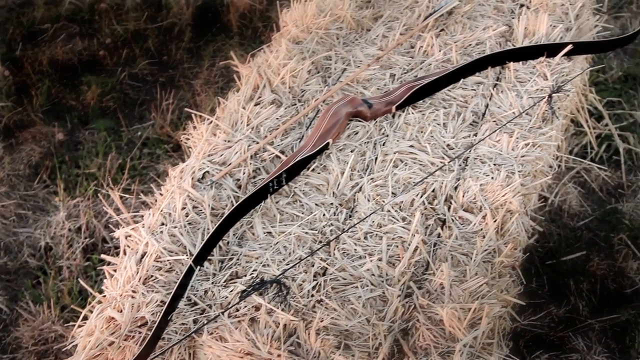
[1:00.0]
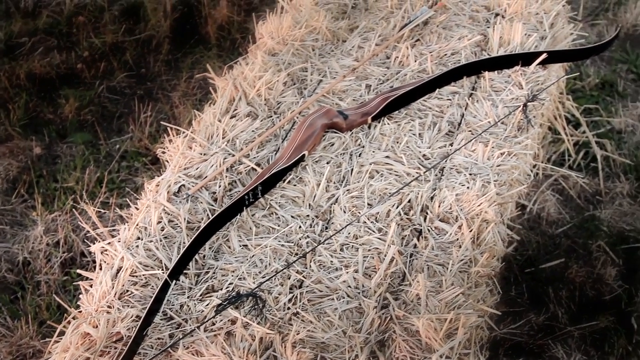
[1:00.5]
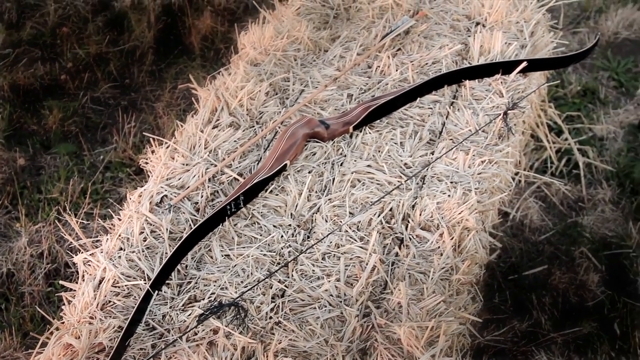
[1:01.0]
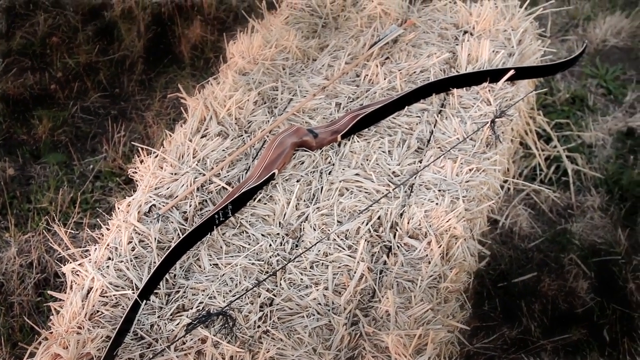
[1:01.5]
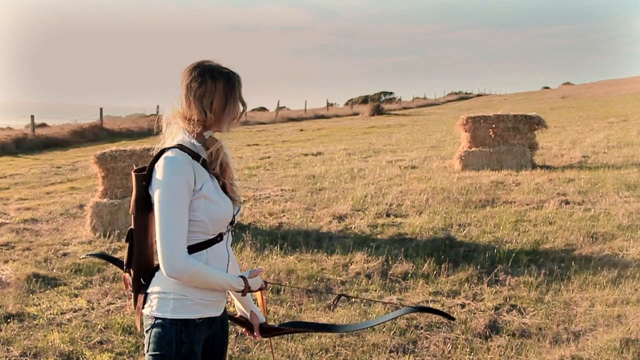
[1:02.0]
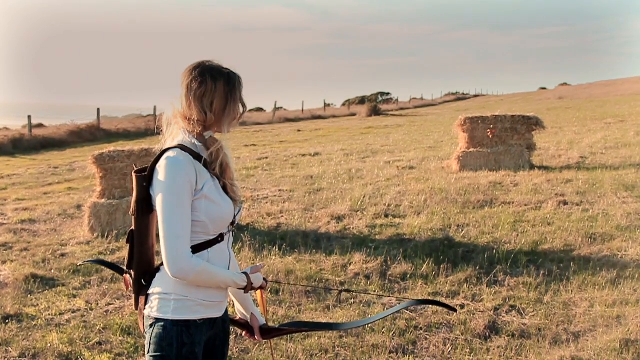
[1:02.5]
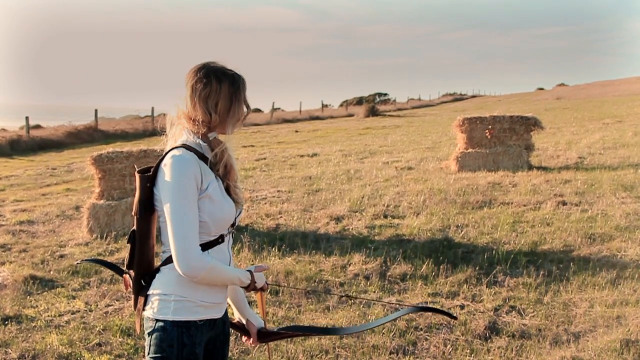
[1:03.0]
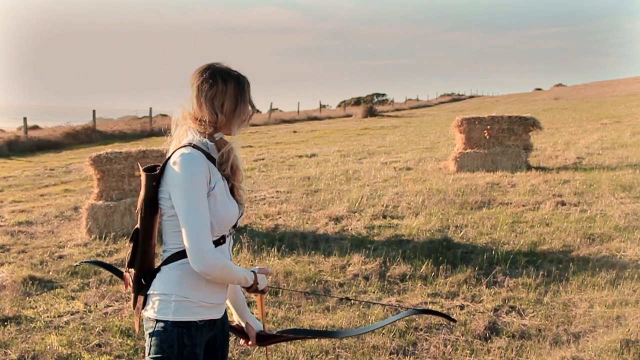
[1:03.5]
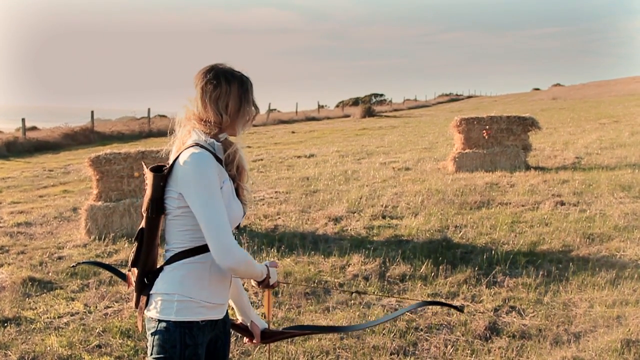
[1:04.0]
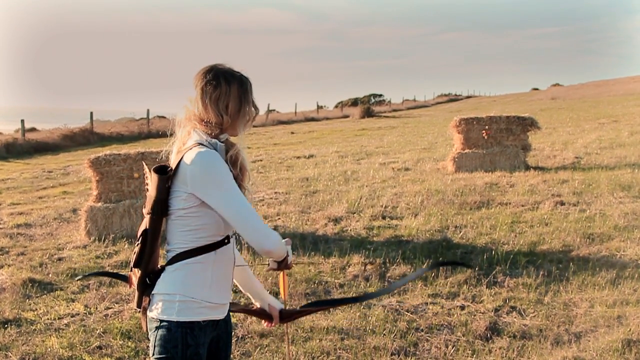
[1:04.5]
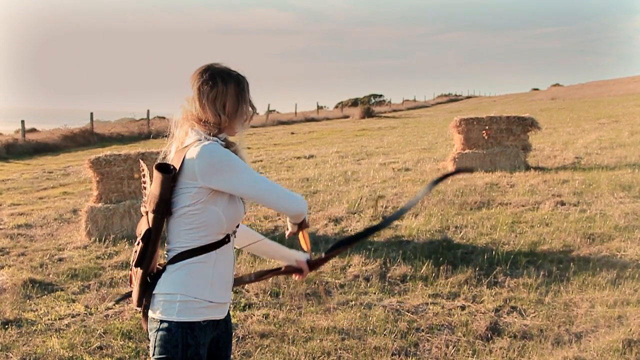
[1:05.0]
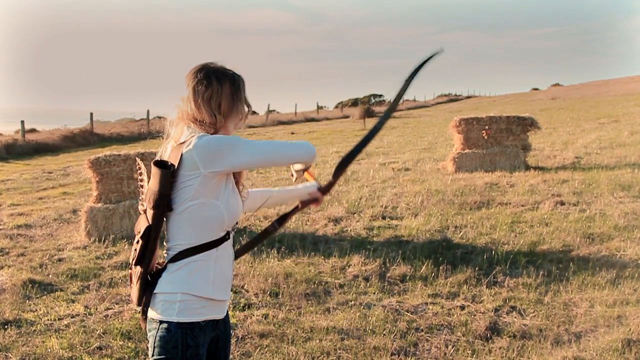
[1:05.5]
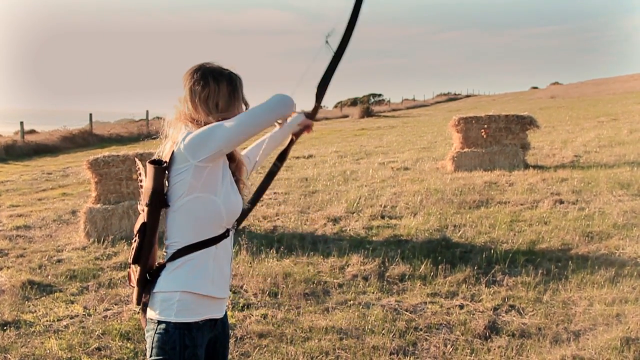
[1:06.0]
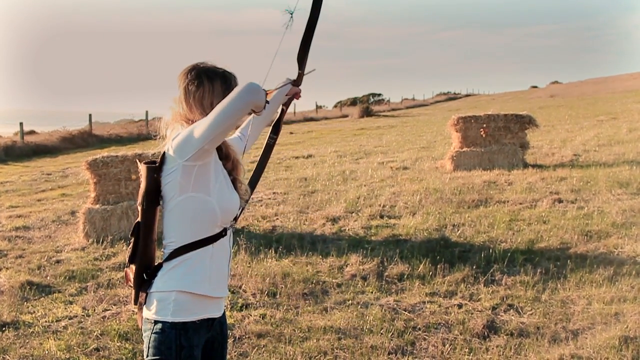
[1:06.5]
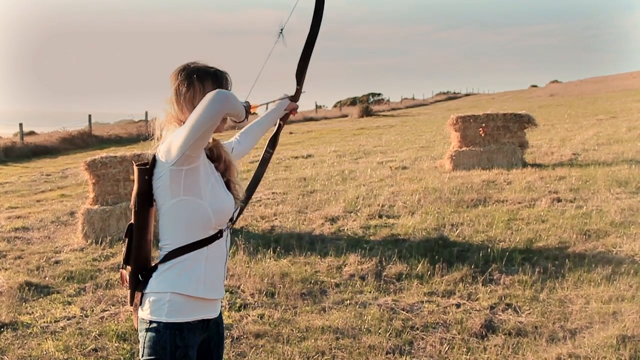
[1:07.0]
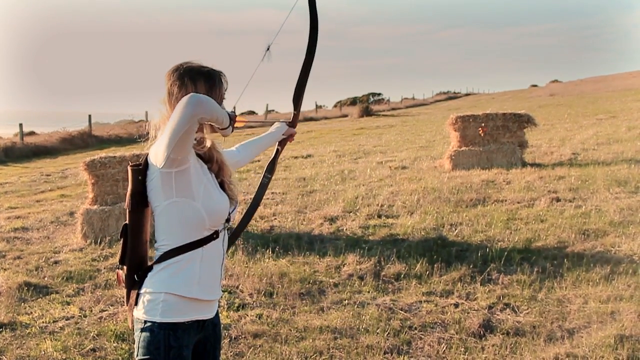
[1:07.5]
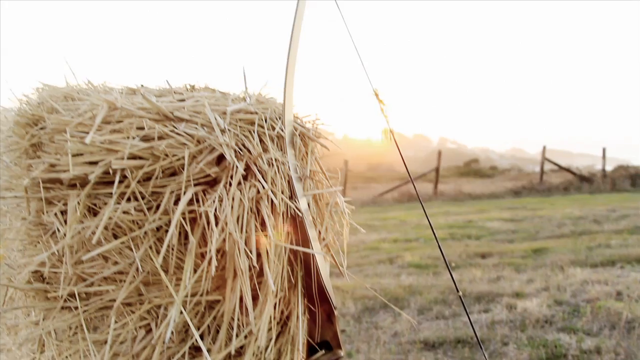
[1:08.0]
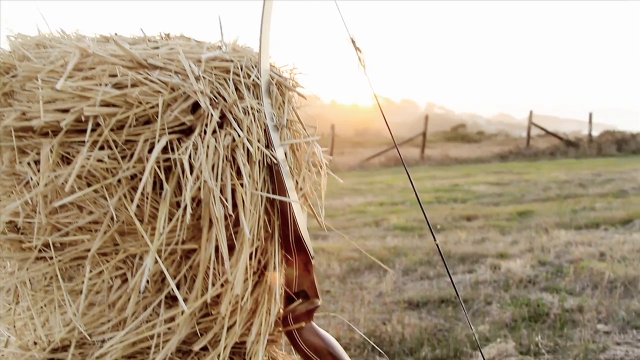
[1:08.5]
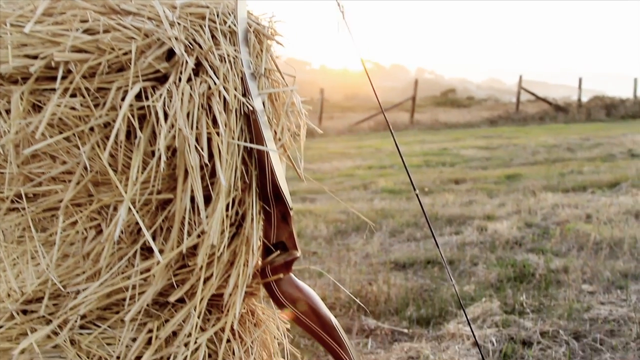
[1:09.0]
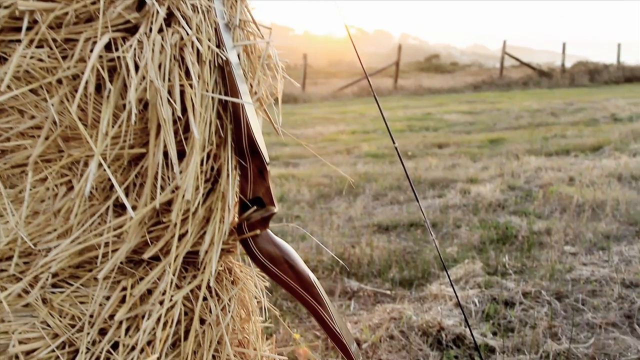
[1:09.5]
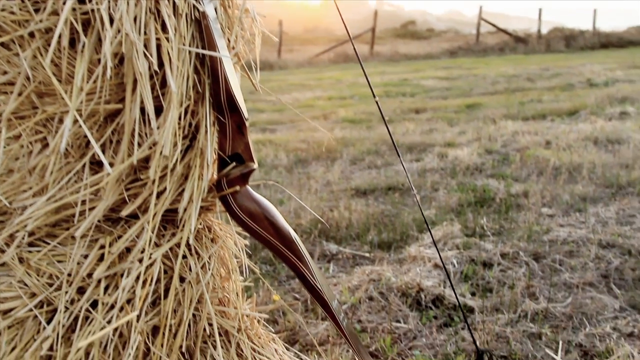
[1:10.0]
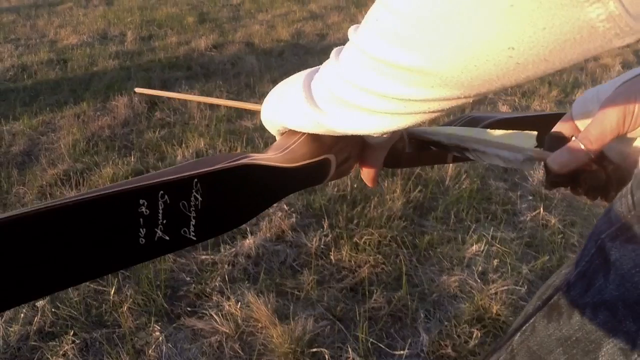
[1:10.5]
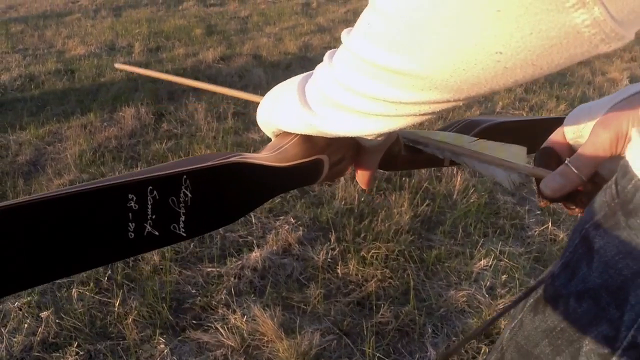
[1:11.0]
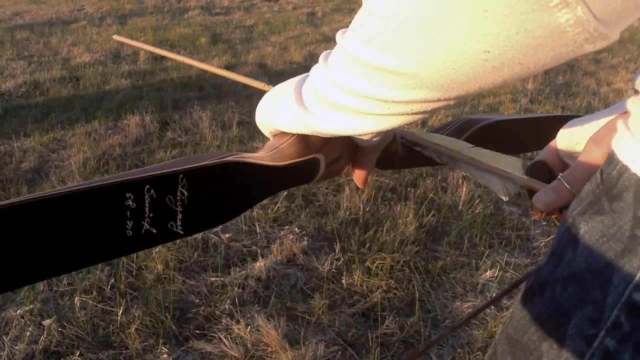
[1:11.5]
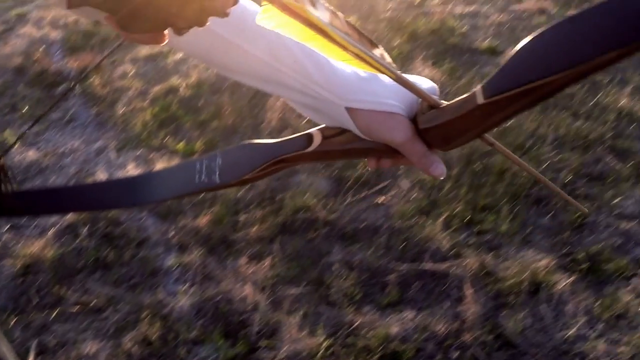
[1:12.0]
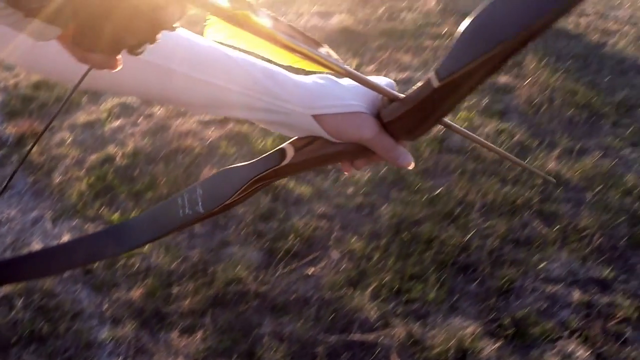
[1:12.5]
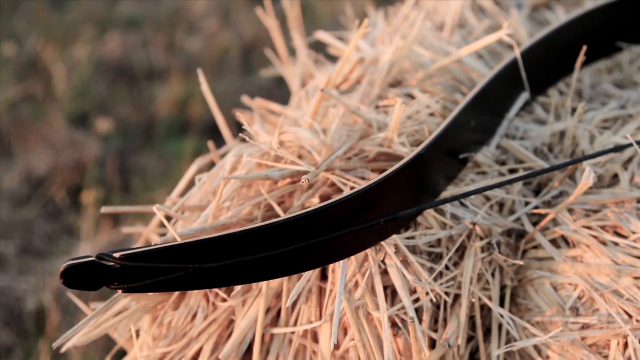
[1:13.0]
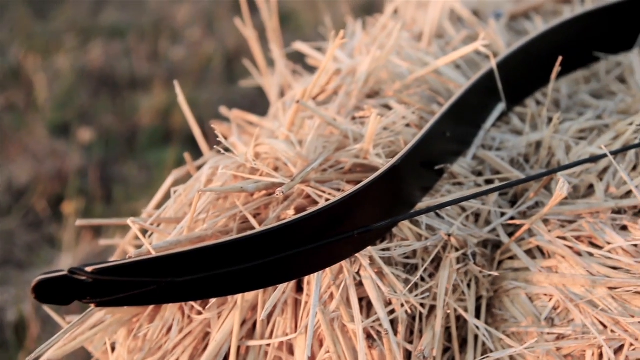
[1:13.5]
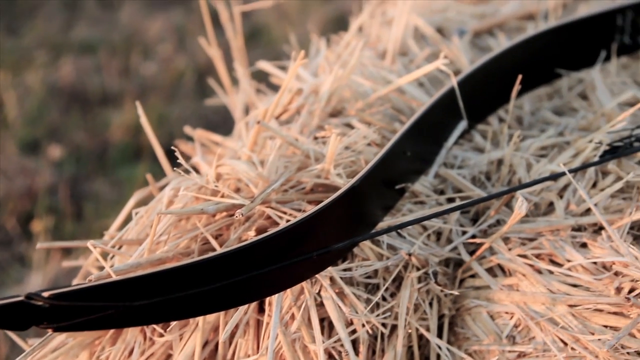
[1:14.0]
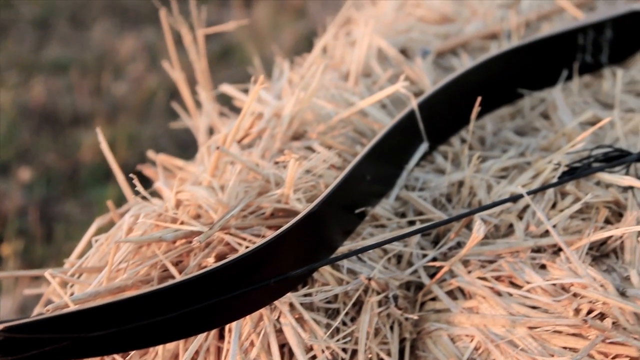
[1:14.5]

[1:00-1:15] A bow and arrow lies on top of a bale of hay while the camera moves slowly. The scene transitions to the girl standing in a field with about two bales of hay. She looks toward one of the bales, standing still while slightly moving her bow and arrow, then slowly raises her arm to get ready to shoot at the bale. The scene changes and the camera moves downward, showing part of the bale of hay up close with the bow and arrow lying against it. A very close shot shows the girl with the bow and arrow in her hand, her elbow at very close range as she gets ready to fire. Another close-up shows her arm and fingernails as she holds the bow and arrow. The scene then changes to a close-up of the bale of hay with the bow and arrow lying on top, followed by a wider view of the same while the camera moves slowly.